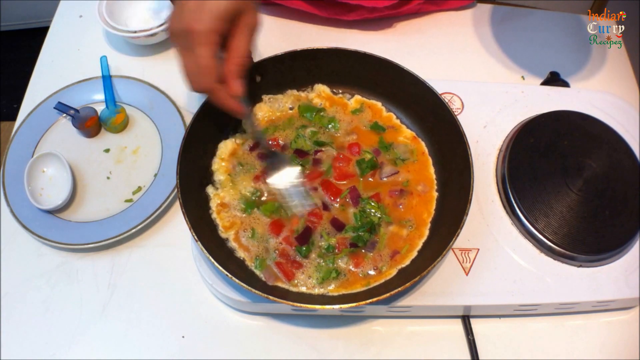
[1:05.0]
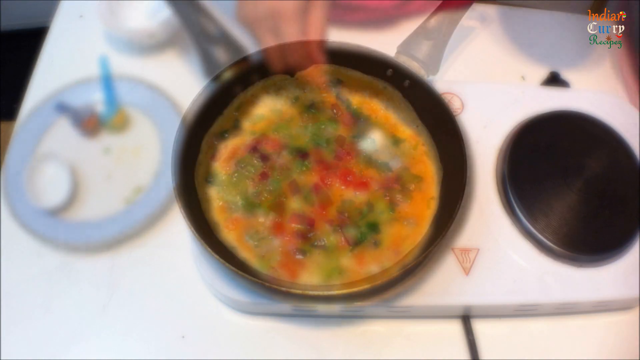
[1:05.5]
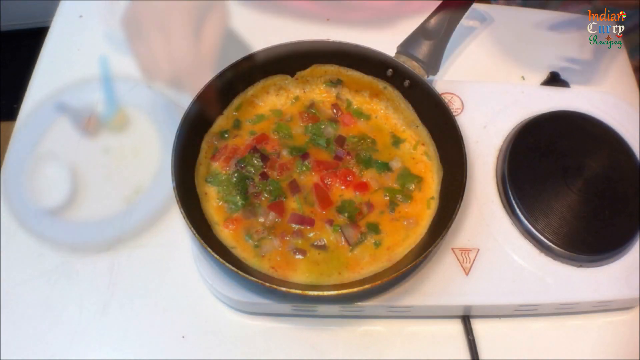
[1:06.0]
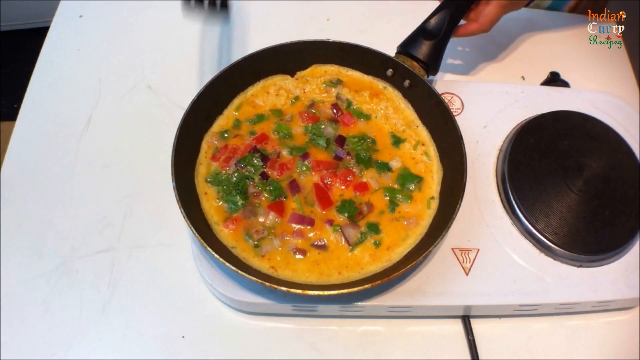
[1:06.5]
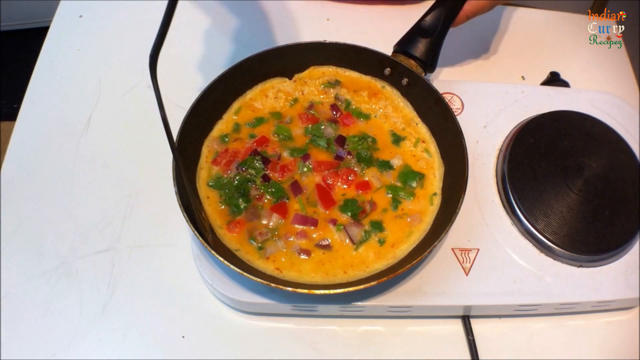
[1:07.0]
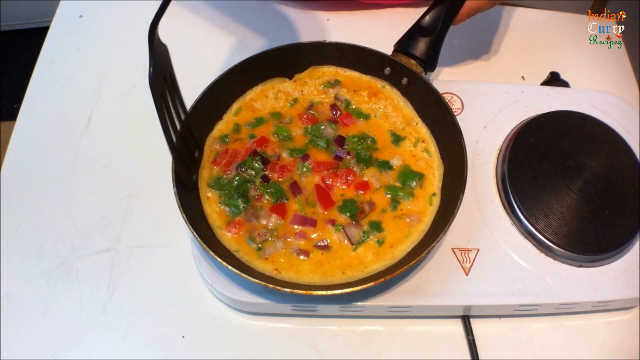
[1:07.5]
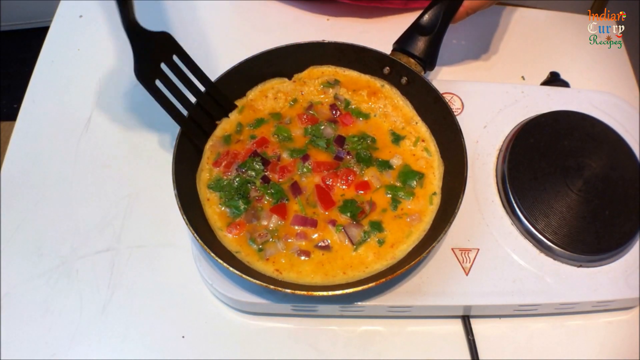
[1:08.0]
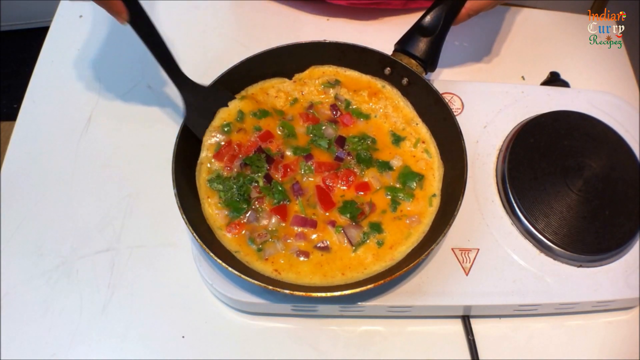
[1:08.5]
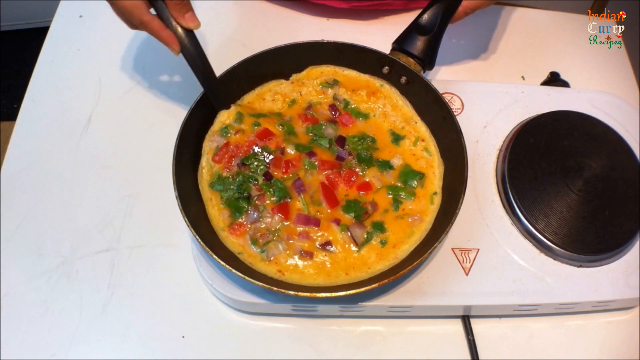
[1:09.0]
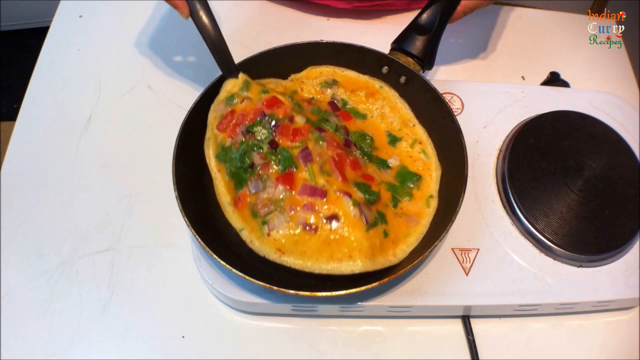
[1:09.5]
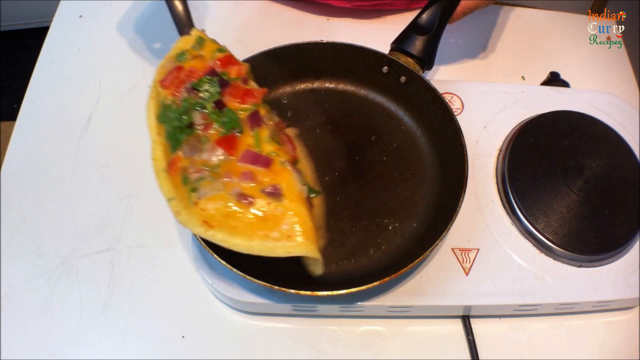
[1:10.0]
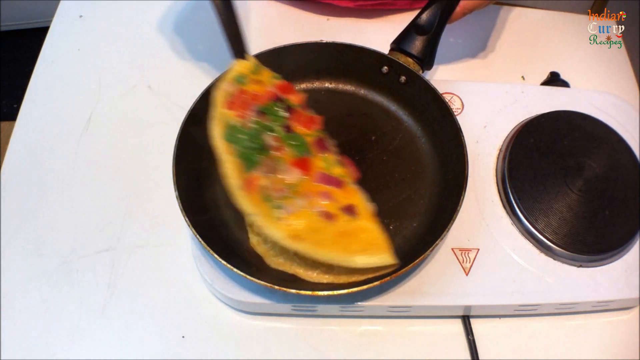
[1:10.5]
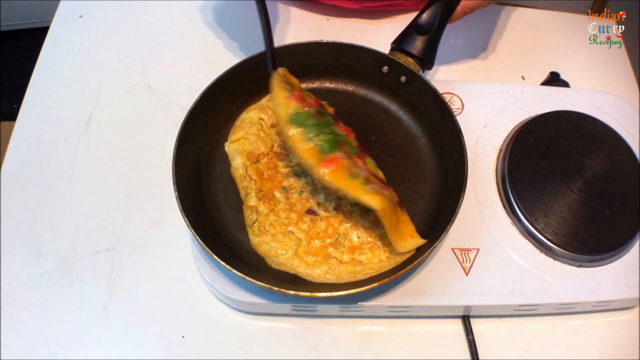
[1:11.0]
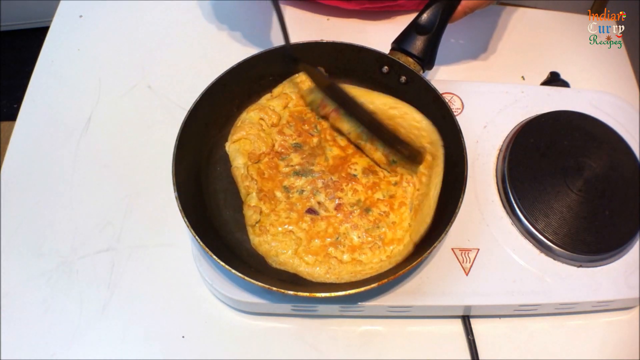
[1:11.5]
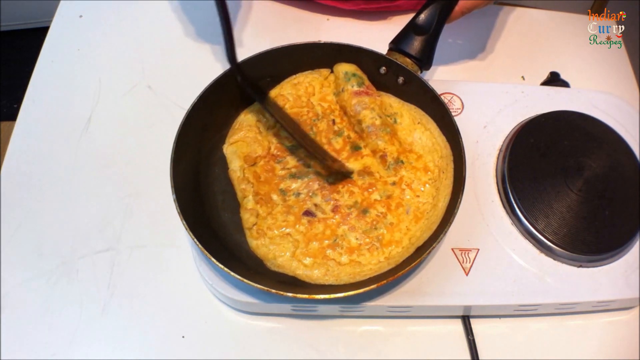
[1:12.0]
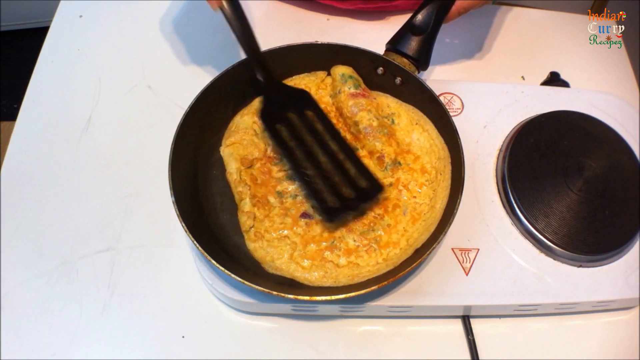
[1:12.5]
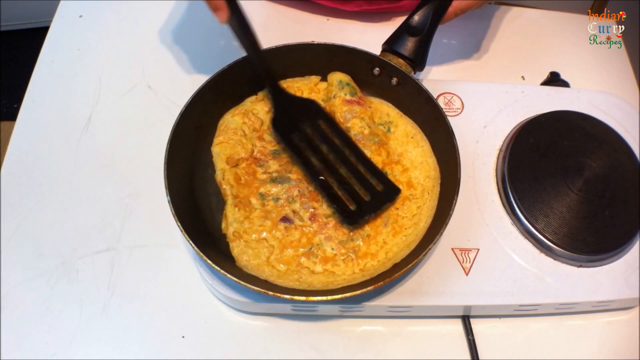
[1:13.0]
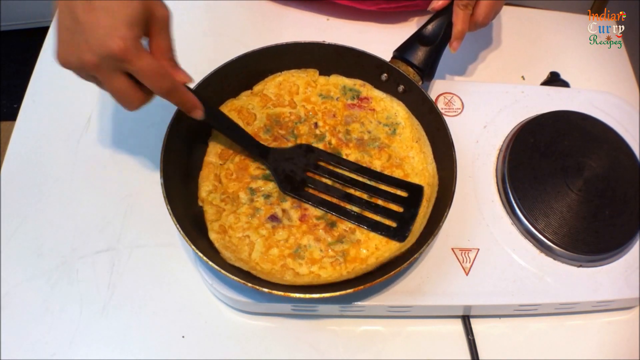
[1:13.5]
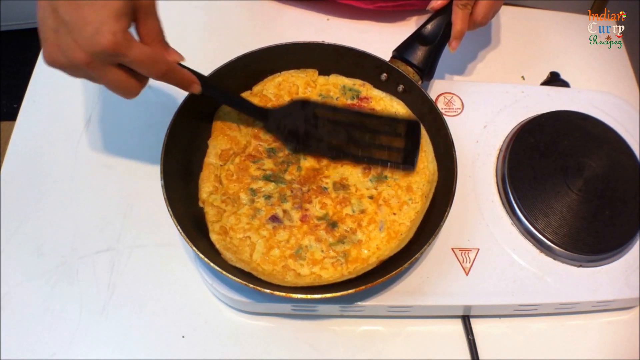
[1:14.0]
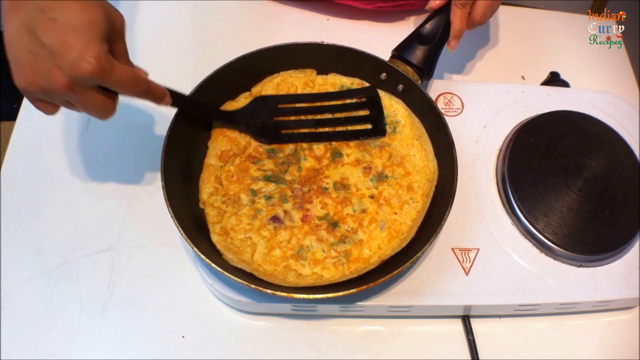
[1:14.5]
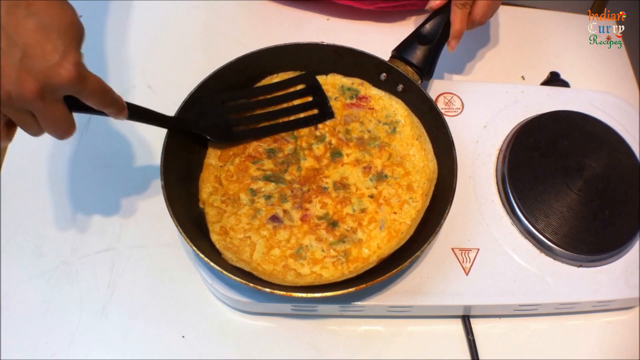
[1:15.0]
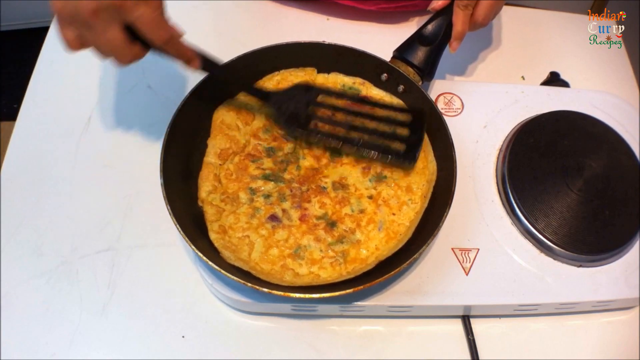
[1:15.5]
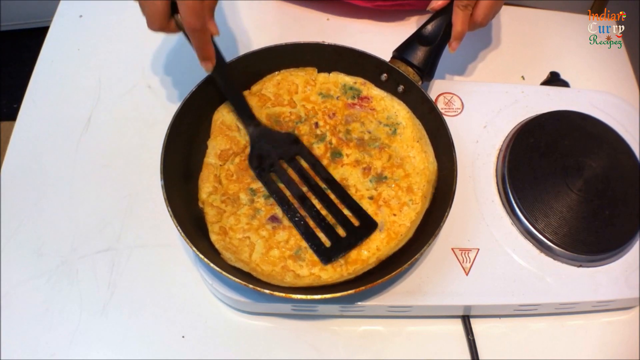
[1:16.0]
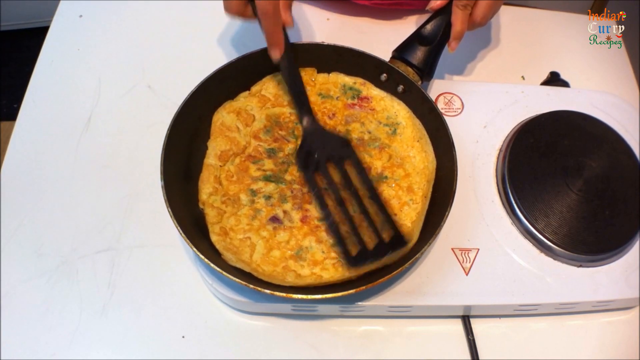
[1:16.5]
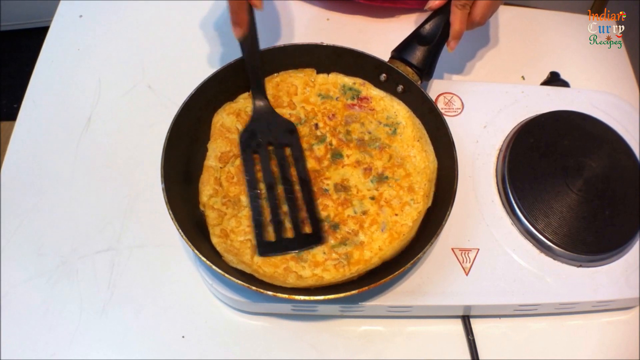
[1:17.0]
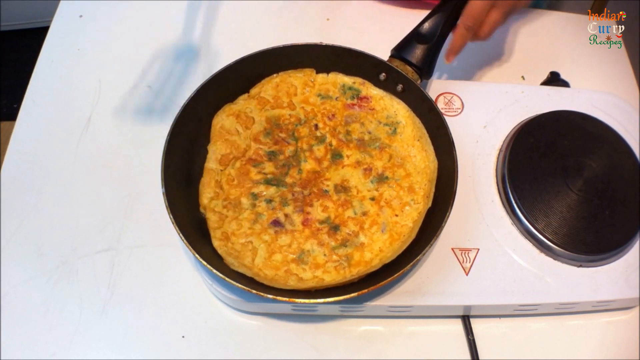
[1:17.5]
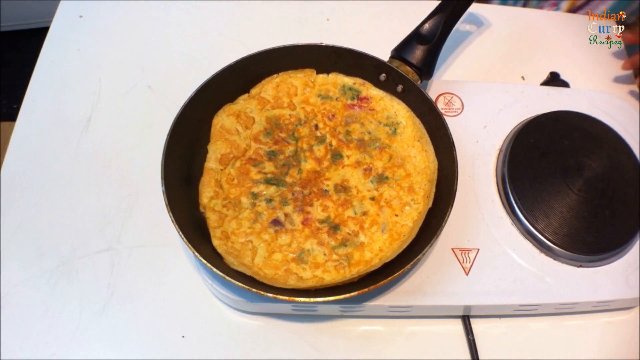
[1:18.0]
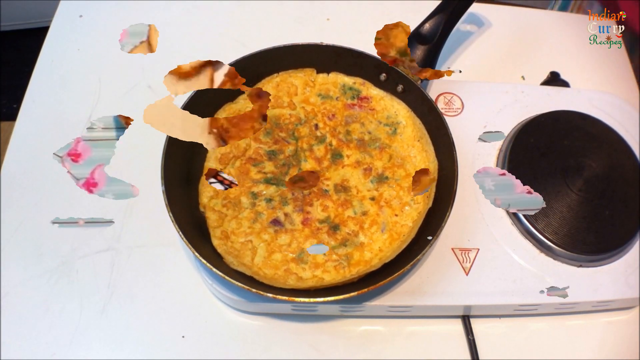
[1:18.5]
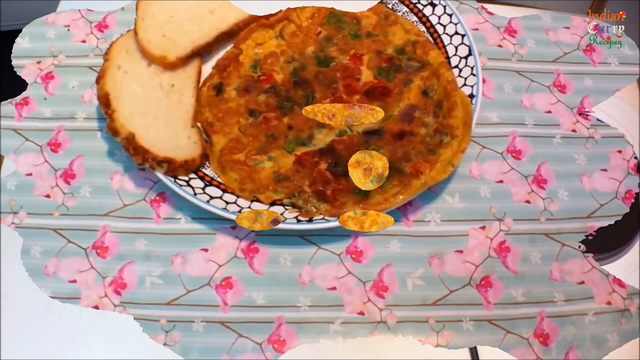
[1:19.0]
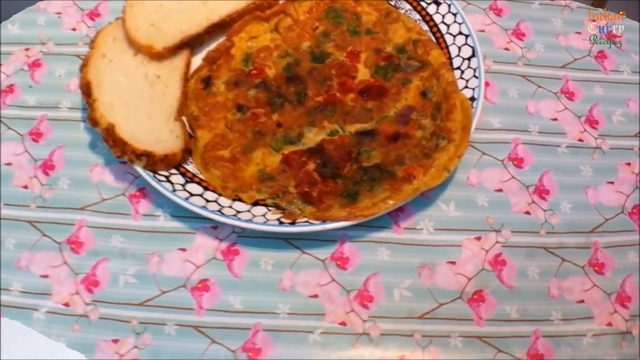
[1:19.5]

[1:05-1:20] Eggs and other ingredients, such as tomatoes, basil and some sugar, are pushed around with a fork in a black pan. The pan is on a very small white portable stove on a white table, which is clear except for the stove and the pan. A transition shows that after a while the egg has turned into an omelette. A hand with a spatula goes underneath the omelette and flips it over, then pats it several times, kind of pushing it down to spread it evenly across the pan and remove creases. A second transition shows the omelette on a plate on a table, looking ready to be served. The plate is white with octagonal designs, black octagon outlines and a blue trim. The omelette is in the center of the plate, with three slices of bread on the side. The tablecloth has a pink colour and outdoor nature designs of twigs with leaves and flowers.